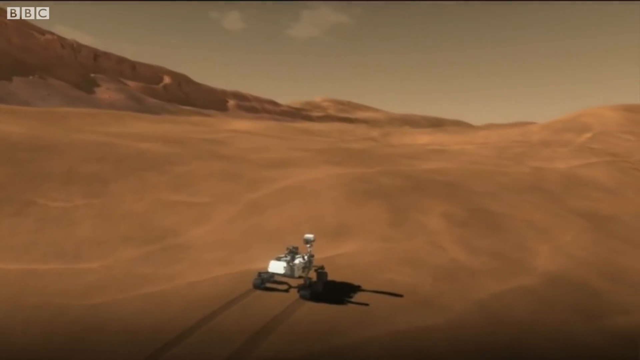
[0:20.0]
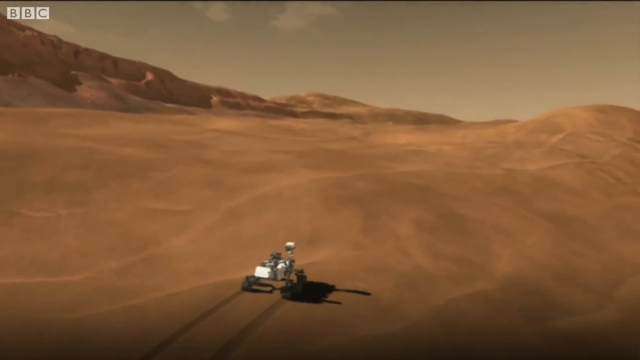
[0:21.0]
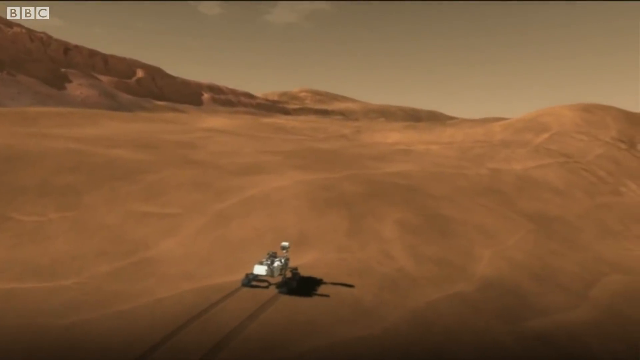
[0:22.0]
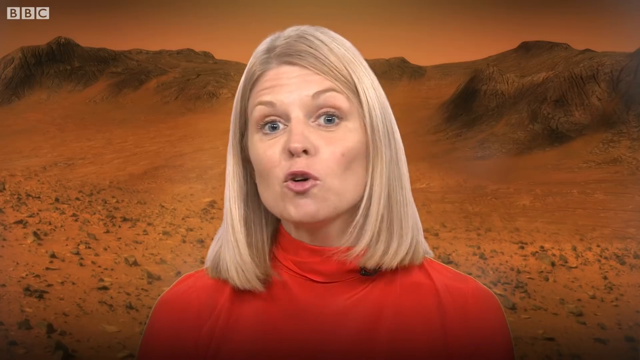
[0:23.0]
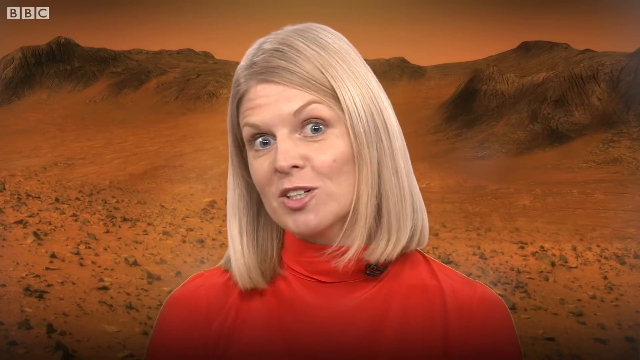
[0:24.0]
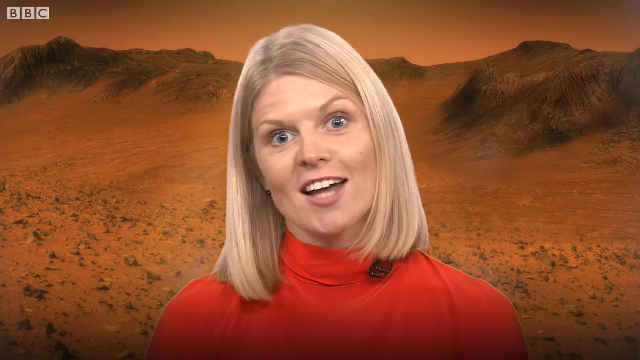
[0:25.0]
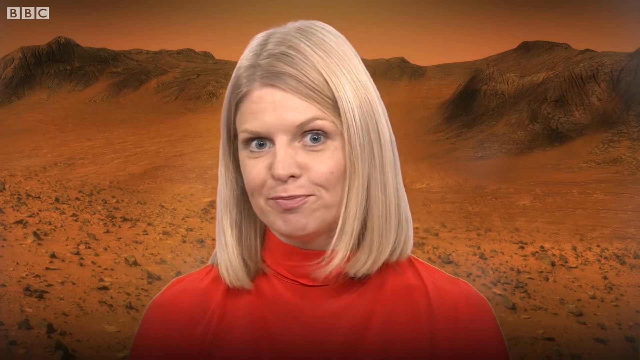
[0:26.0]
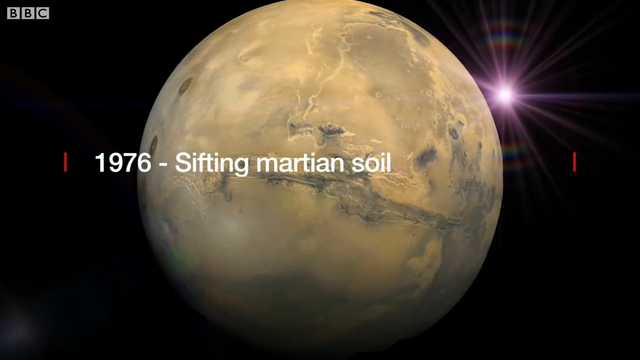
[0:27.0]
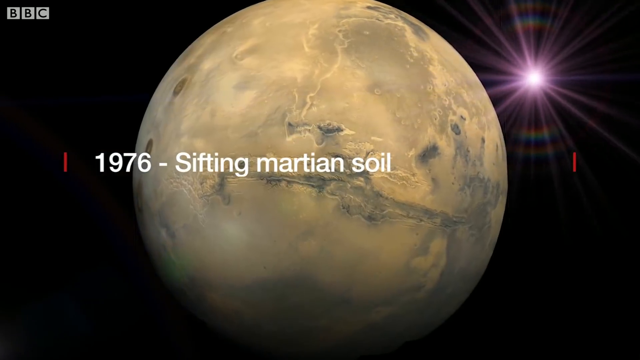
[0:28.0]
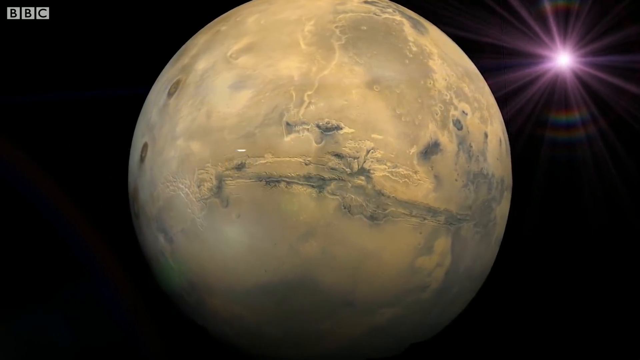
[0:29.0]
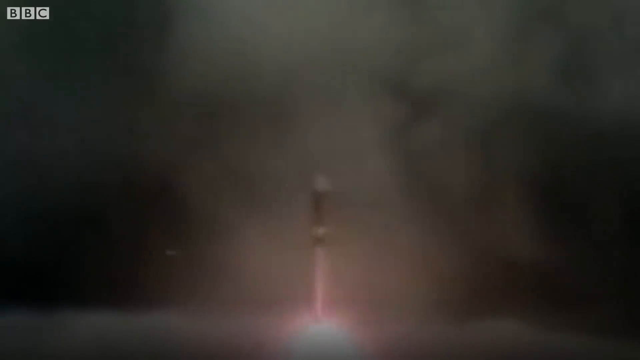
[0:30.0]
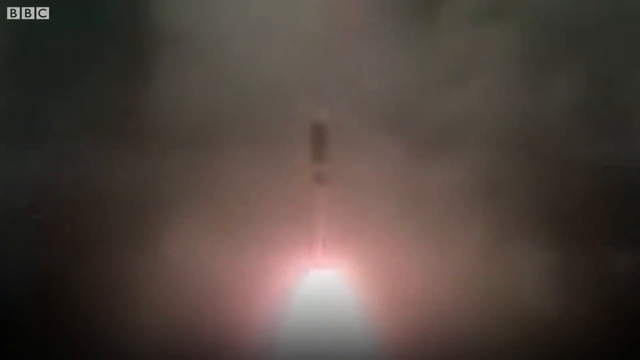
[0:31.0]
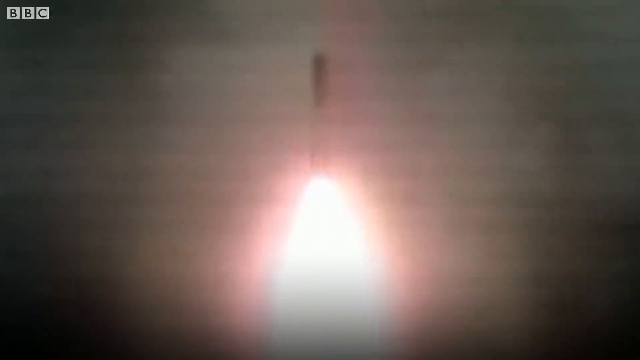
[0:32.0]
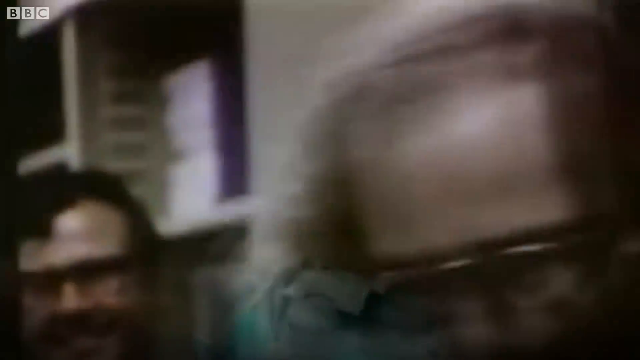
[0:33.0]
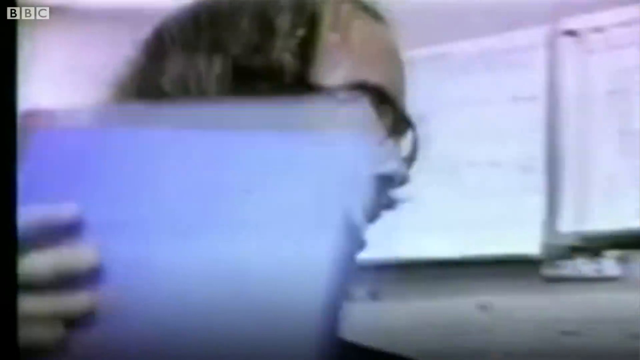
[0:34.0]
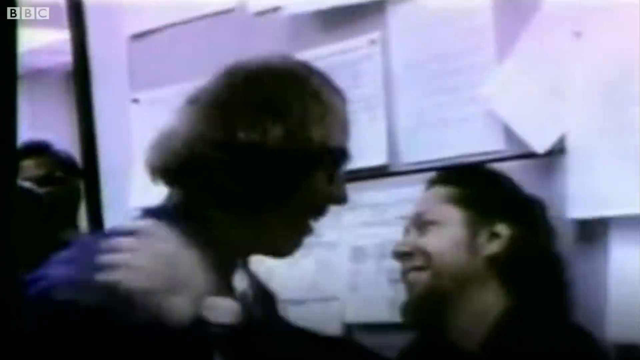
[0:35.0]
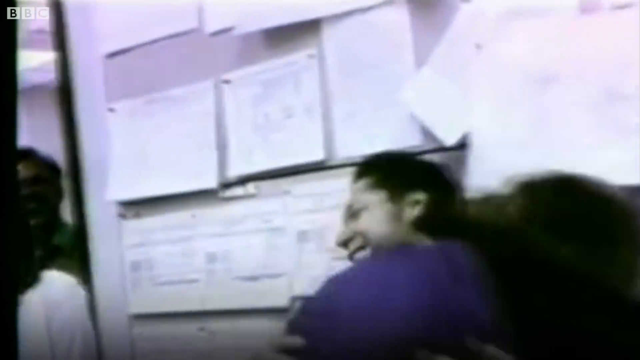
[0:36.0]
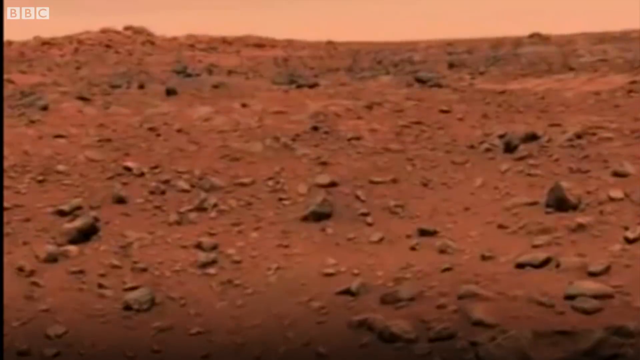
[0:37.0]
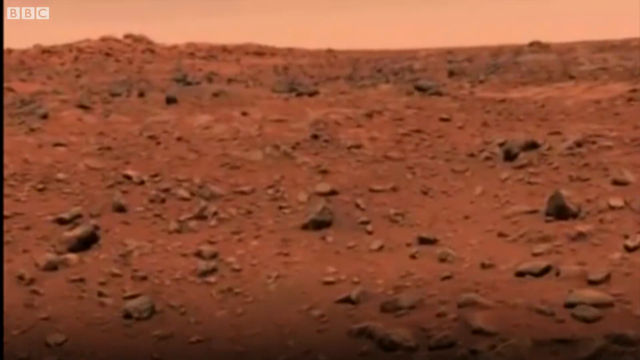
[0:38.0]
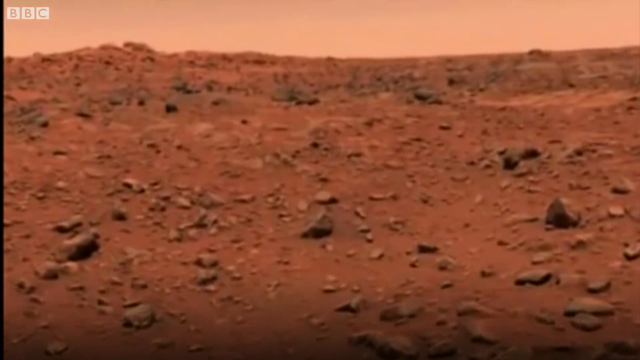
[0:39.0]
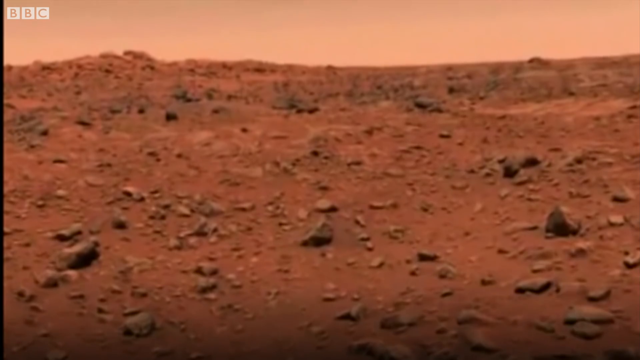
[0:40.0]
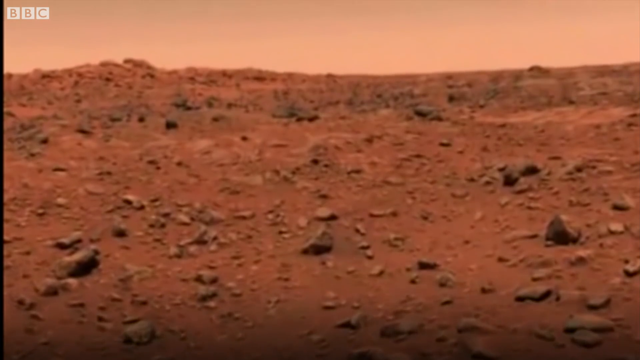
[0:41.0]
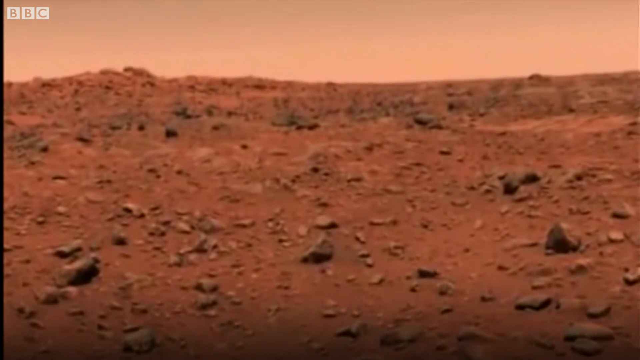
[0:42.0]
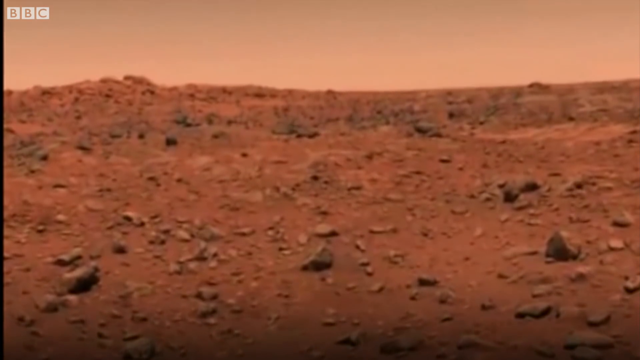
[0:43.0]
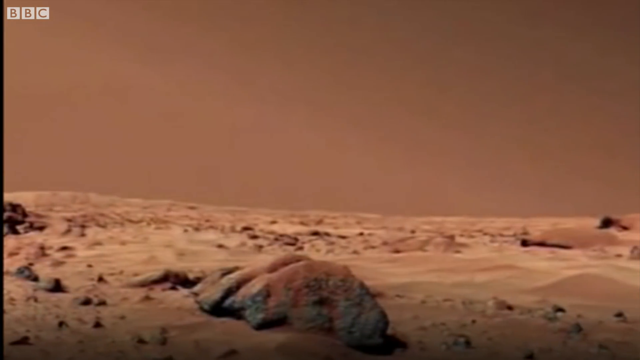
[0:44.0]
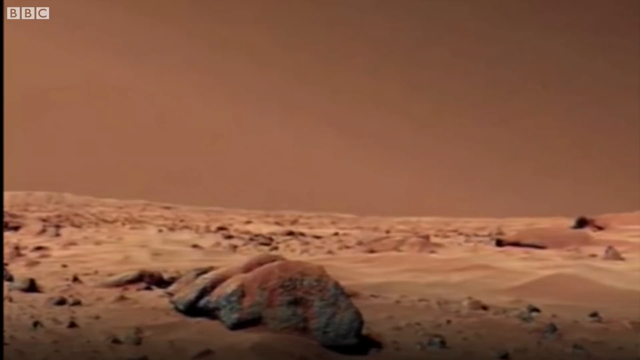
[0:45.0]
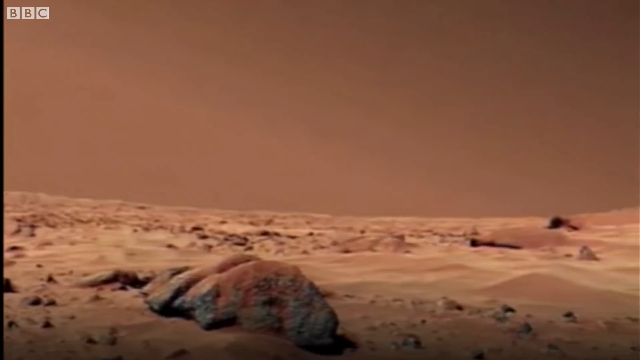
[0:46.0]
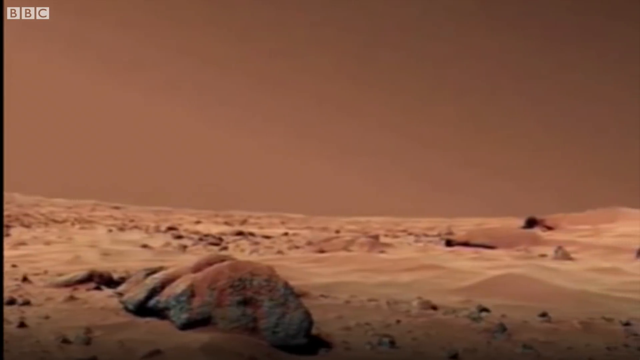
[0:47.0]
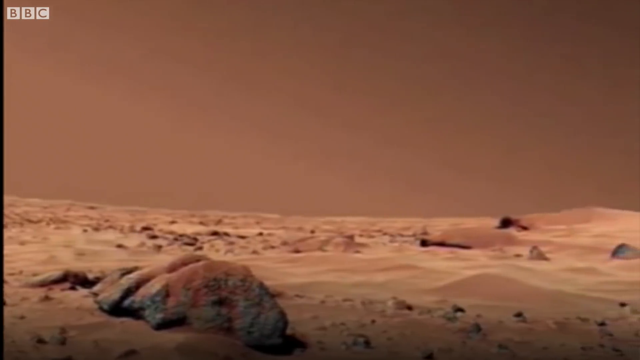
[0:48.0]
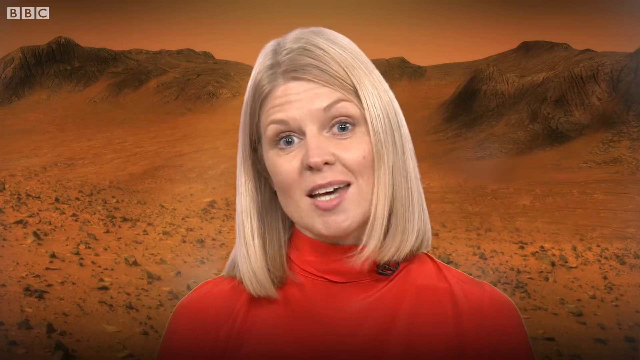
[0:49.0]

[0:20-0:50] On a BBC news screen with the BBC logo at the top left, a news presenter appears, a woman in a red top with white hair. She explains something in front of a desert-like background. After some explanation, an animation of a planet appears in the background, with the text "1976" and words beginning "sifting" written on it. A rocket then appears, ascending fast toward the sky with a huge blaze of fire behind it; the background is dusty and the rocket looks somewhat invisible. A man wearing spectacles then appears, talking to another man who also looks like he is laughing. Behind them is a wall with a series of papers pinned to it.